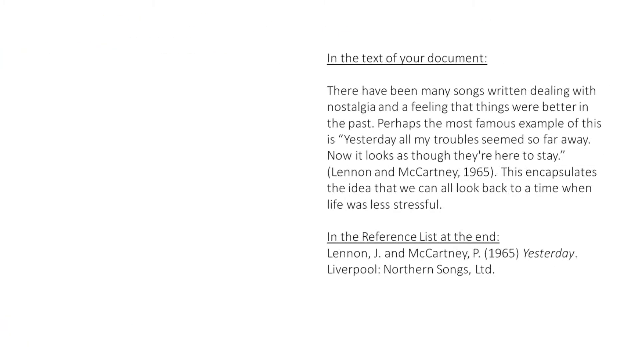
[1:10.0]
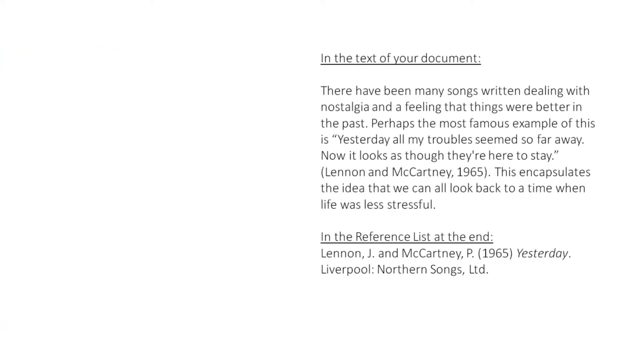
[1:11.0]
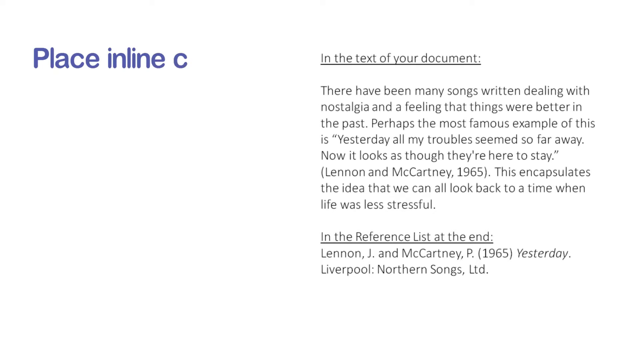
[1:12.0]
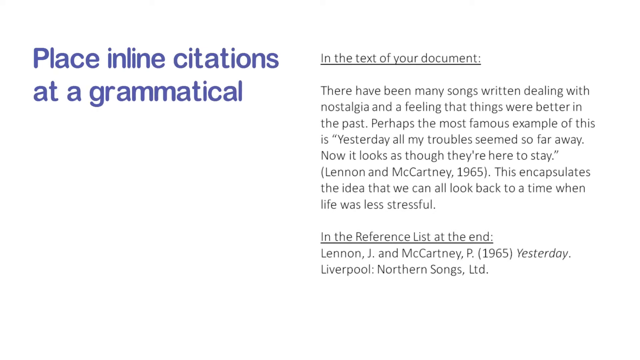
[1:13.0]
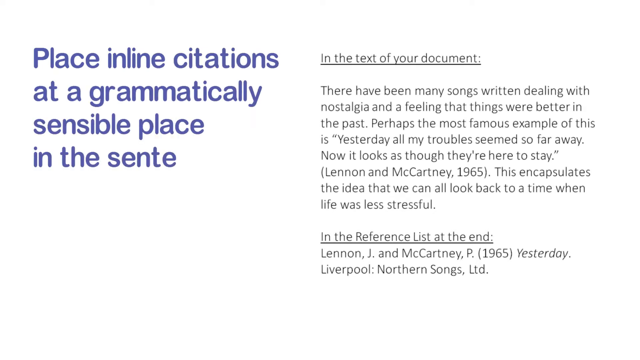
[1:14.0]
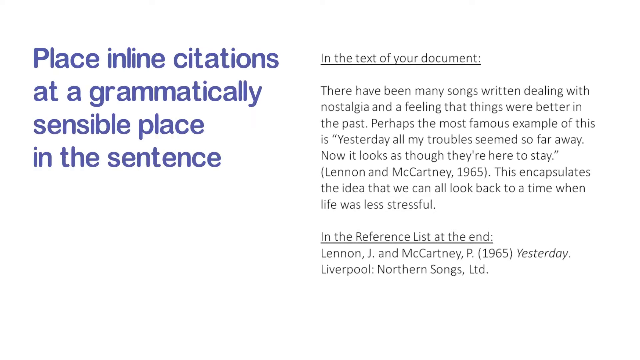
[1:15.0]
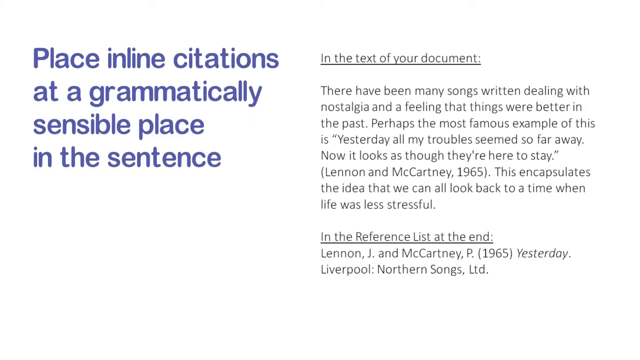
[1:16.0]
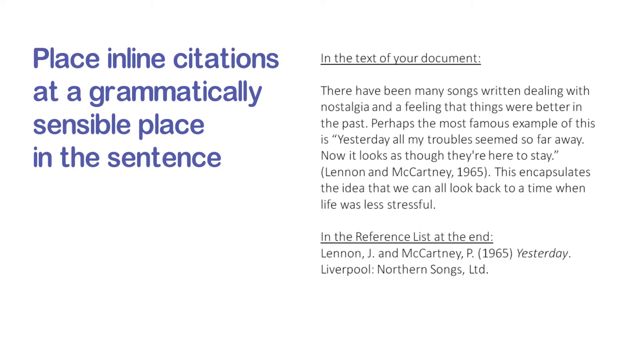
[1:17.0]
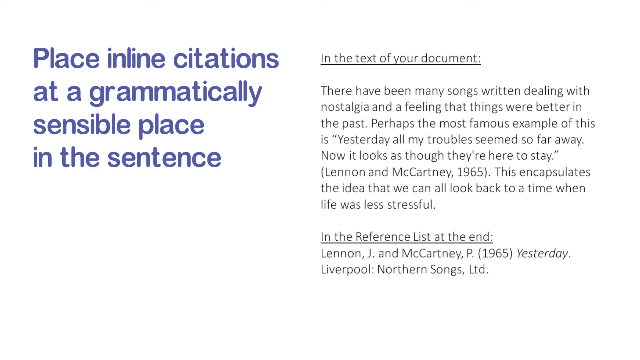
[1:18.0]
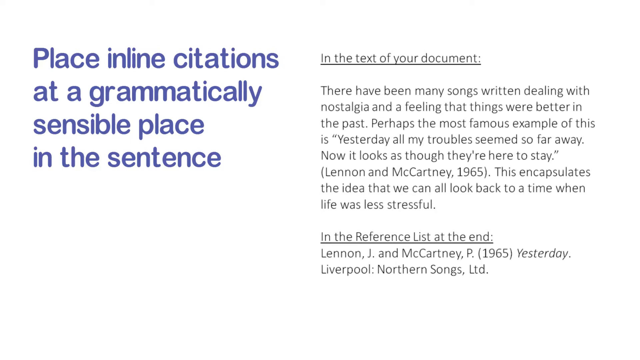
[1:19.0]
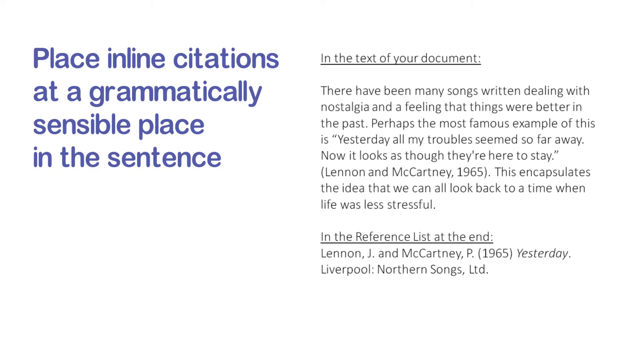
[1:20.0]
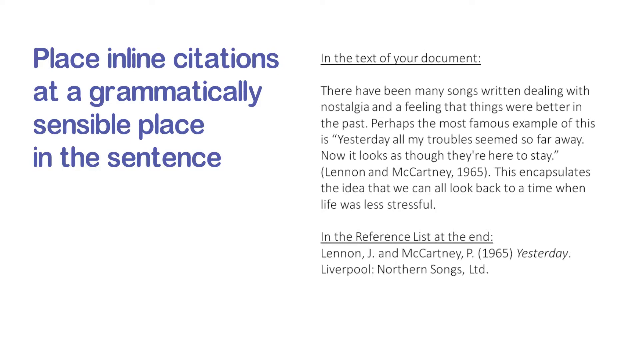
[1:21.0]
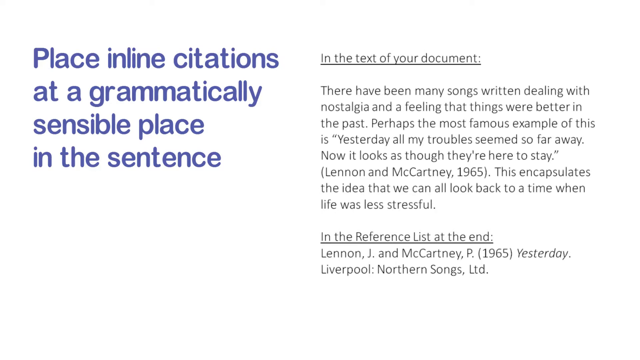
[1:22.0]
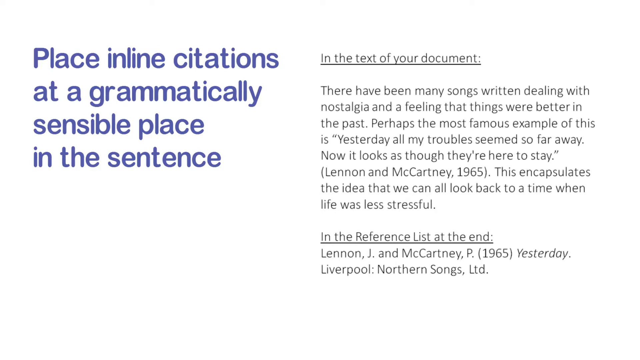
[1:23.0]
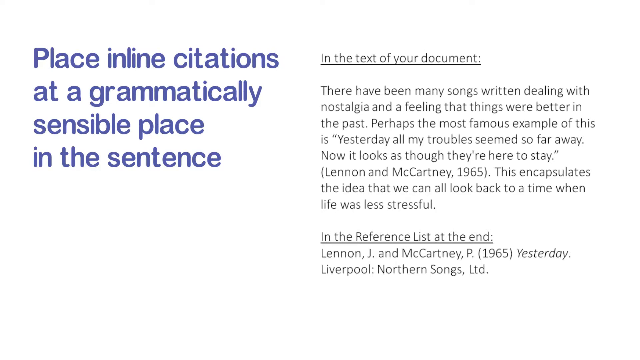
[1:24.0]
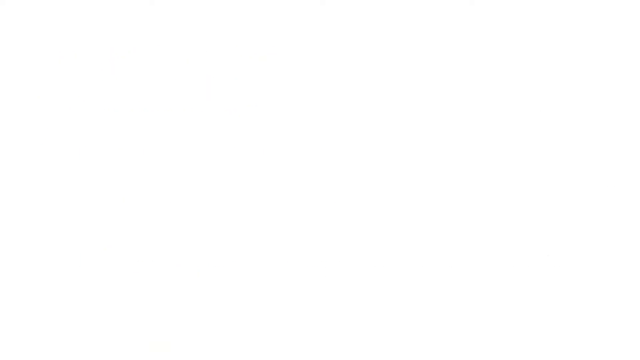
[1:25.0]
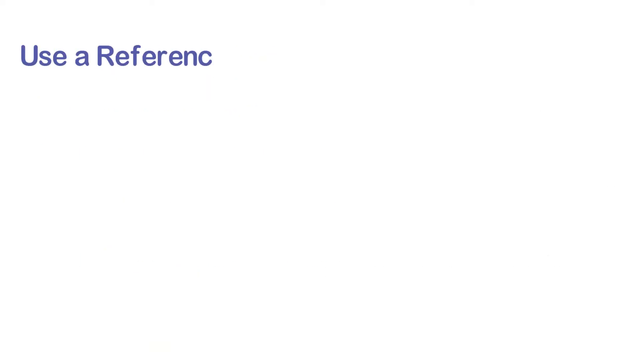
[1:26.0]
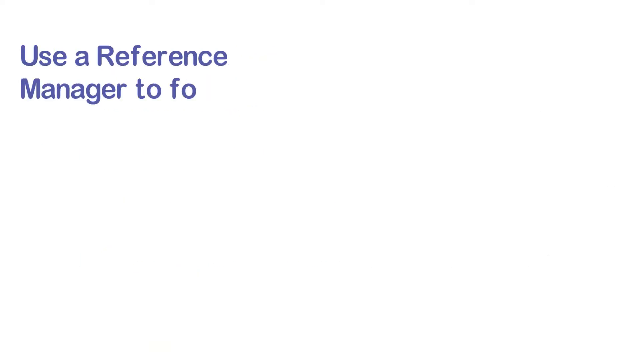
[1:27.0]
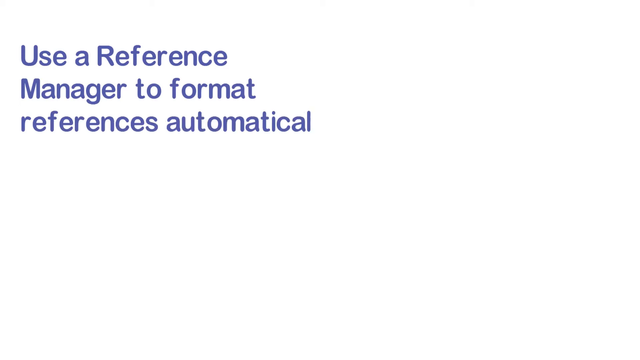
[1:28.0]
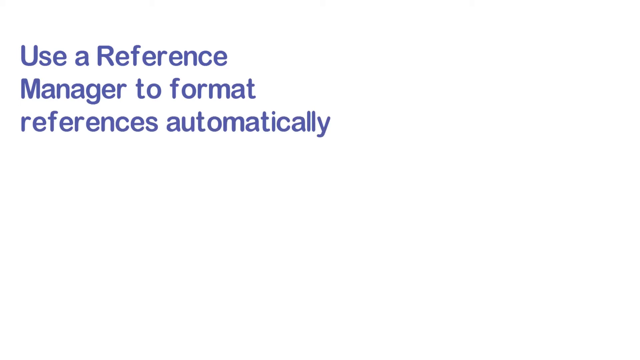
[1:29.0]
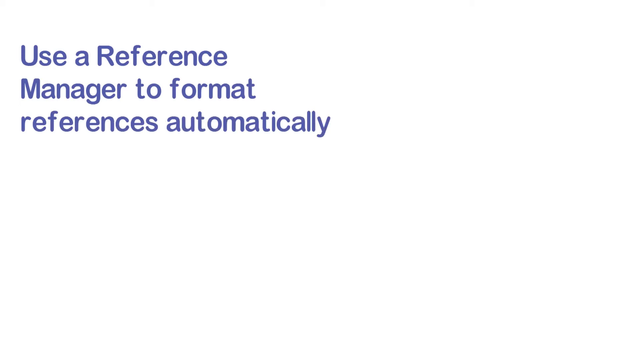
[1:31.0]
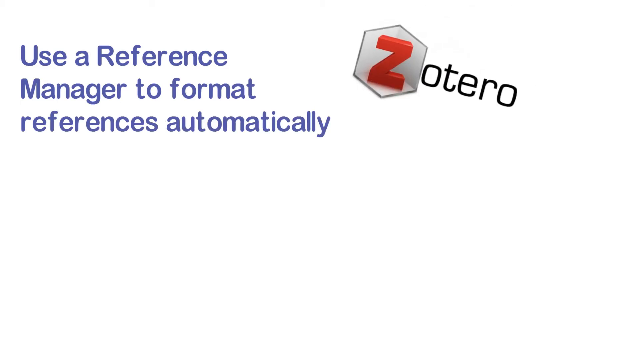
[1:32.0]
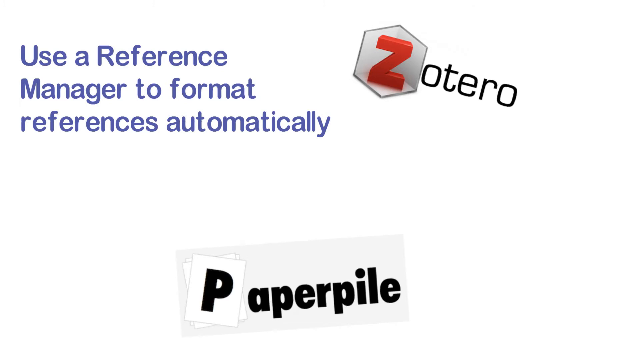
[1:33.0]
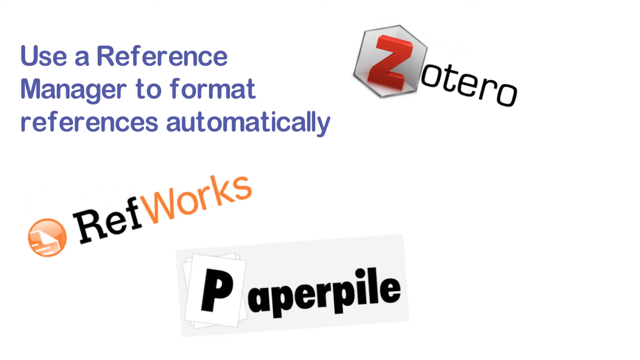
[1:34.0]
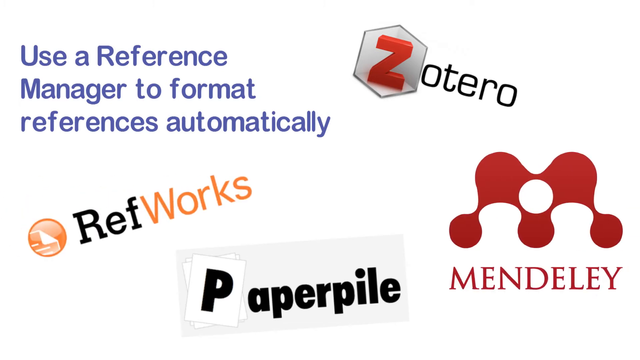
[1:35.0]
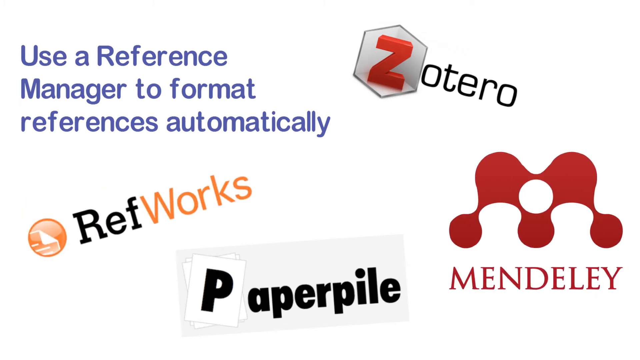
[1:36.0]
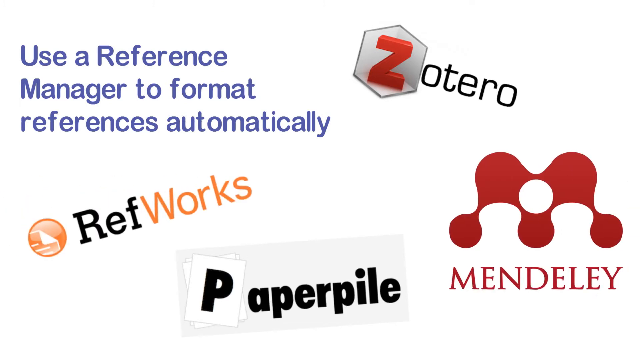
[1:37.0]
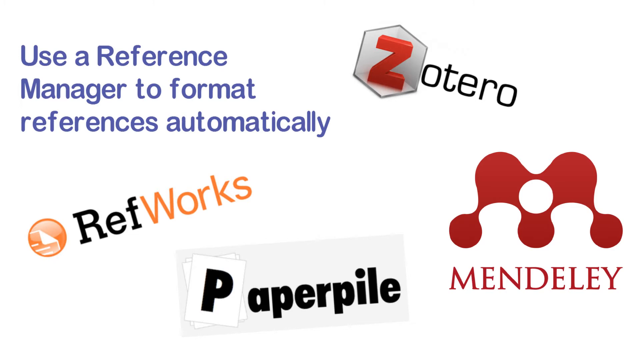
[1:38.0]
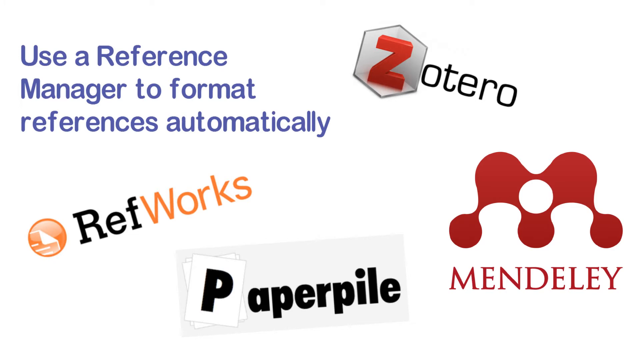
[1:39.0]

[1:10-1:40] The screen is white. At the top of the left side, in blue, is the text "Place inline citations at a grammatically sensible place in the sentence." To the right of that, in gray and underlined, is "In the text of your document." Underneath is "There have been many songs written dealing with nostalgia and a feeling that things were better in the past. Perhaps the most famous example of this is Yesterday. All my troubles seemed so far away. Now it looks as though they're here to stay," with "(Lennon and McCartney, 1965)" in parentheses under it, followed by "This encapsulates the idea that we can all look back to a time when life was less stressful." Beneath that, underlined, is "In the reference list at the end," and under it "Lennon, J., and McCartney, P., 1965, Yesterday, Liverpool, Northern Songs, Ltd." The screen then turns white again, and in blue, starting in the top left corner, text reads "Use a reference manager to format references automatically."